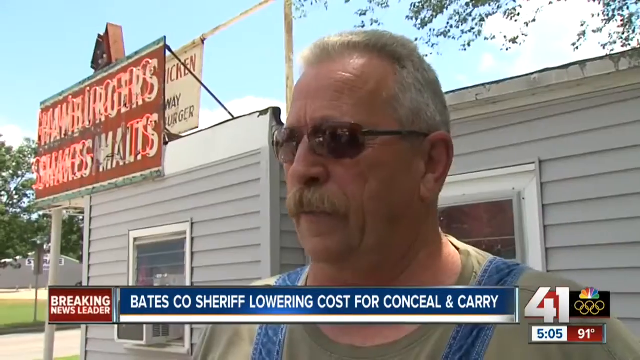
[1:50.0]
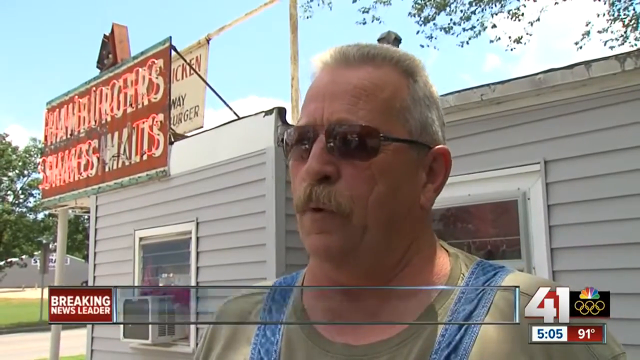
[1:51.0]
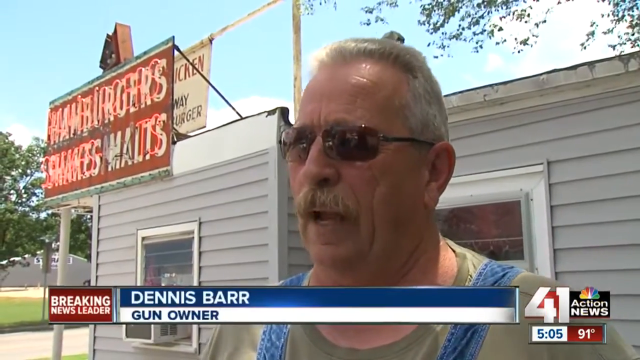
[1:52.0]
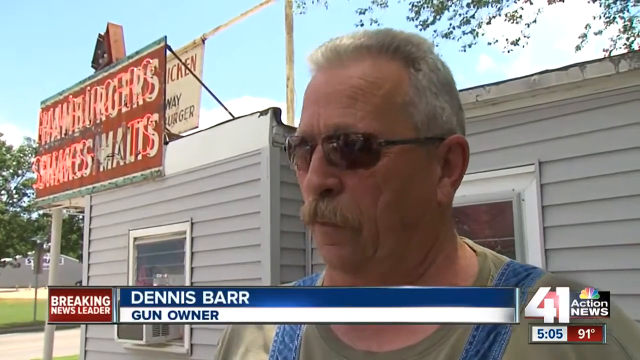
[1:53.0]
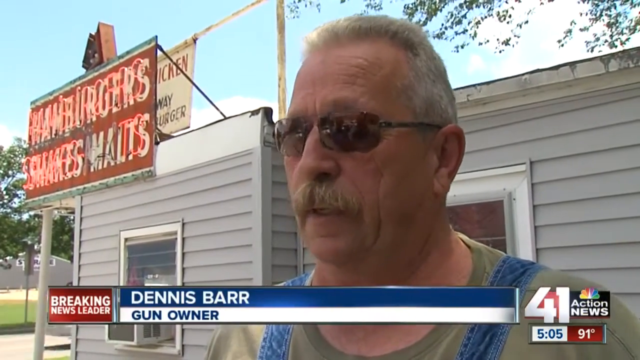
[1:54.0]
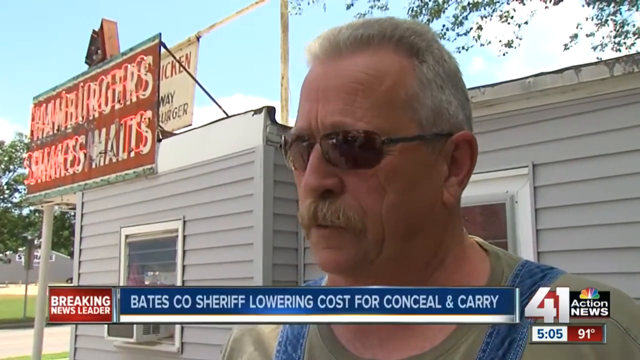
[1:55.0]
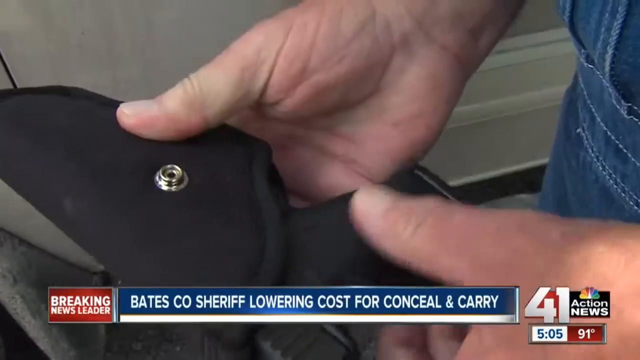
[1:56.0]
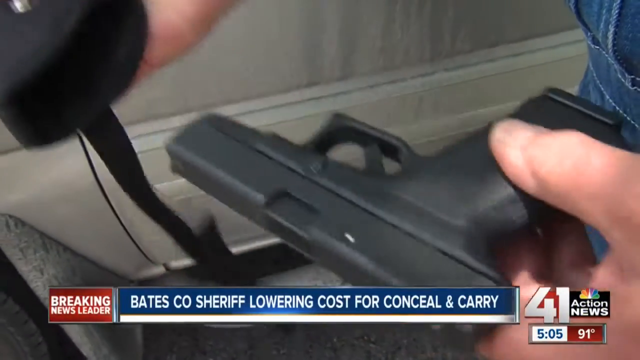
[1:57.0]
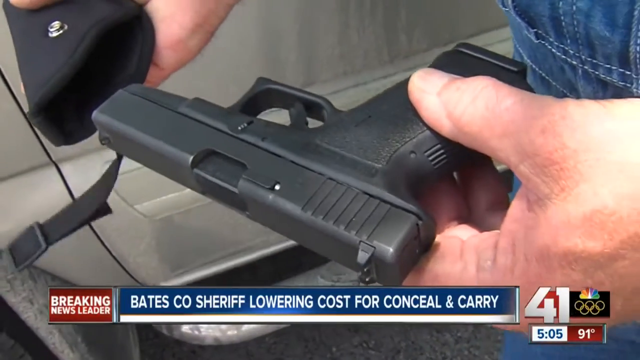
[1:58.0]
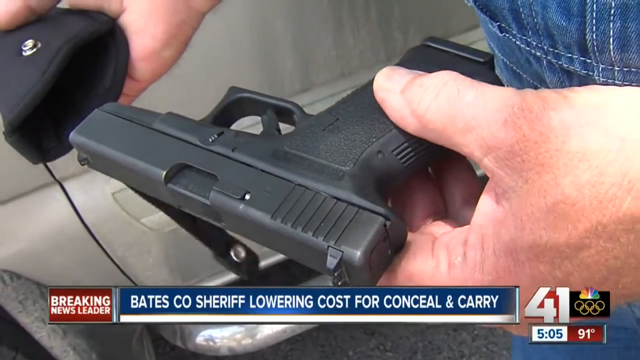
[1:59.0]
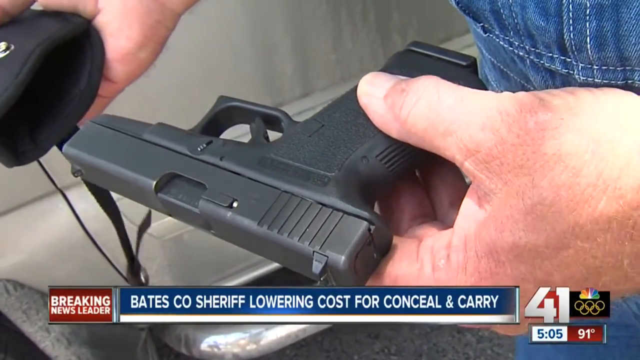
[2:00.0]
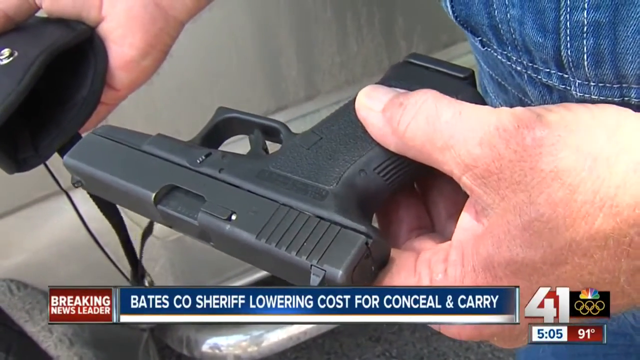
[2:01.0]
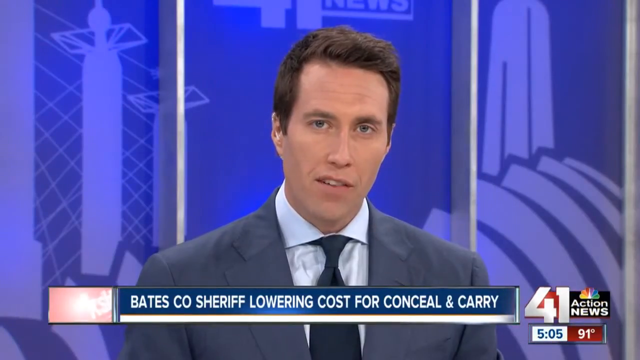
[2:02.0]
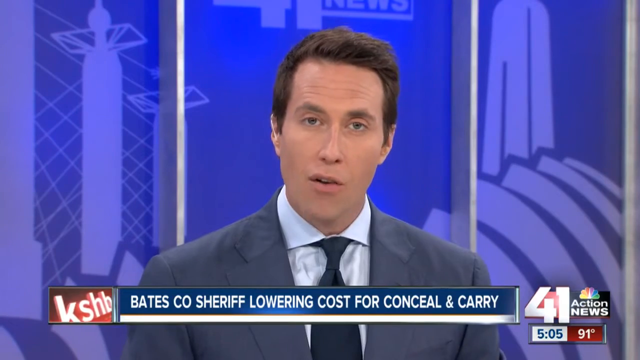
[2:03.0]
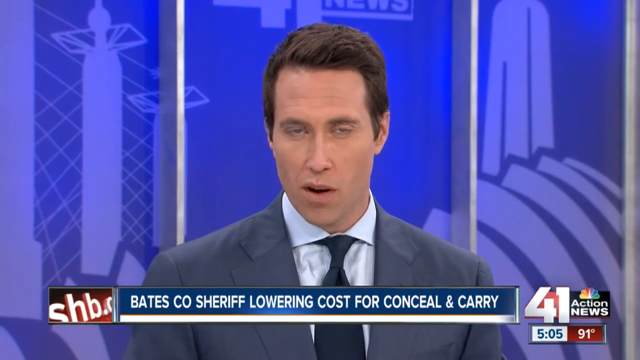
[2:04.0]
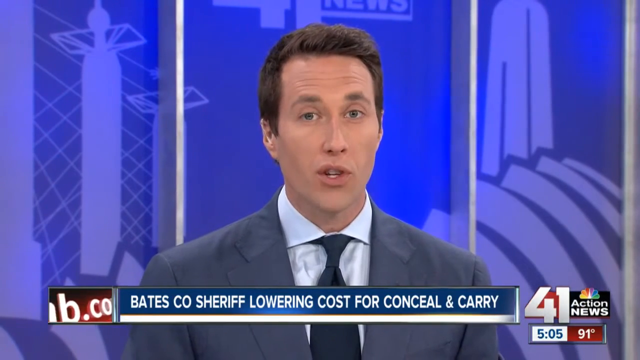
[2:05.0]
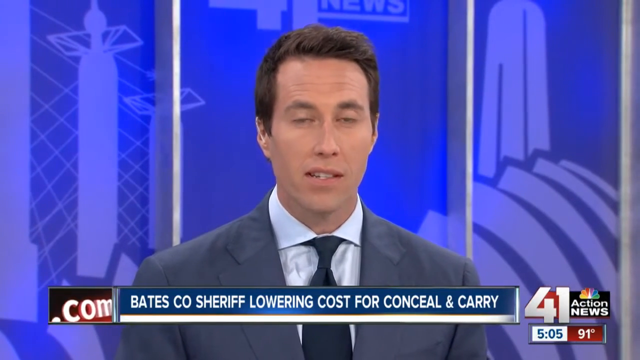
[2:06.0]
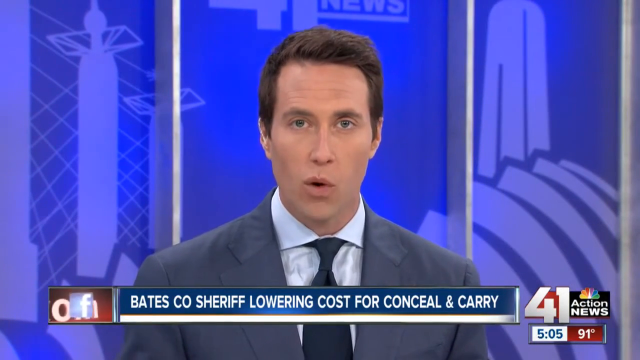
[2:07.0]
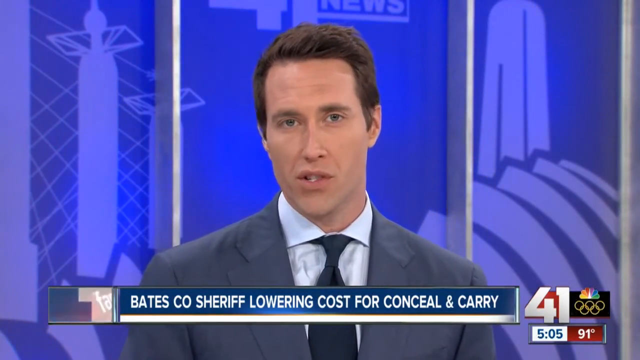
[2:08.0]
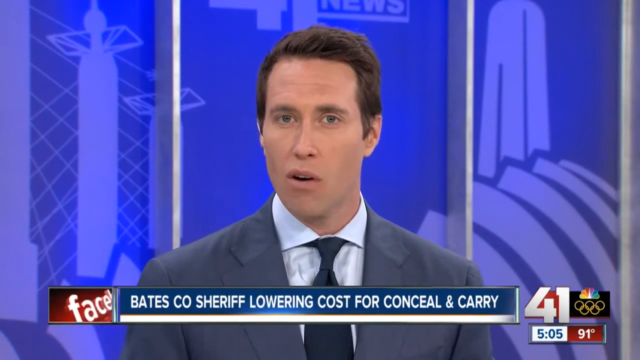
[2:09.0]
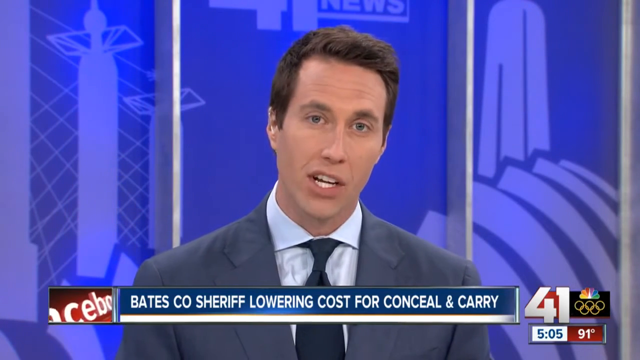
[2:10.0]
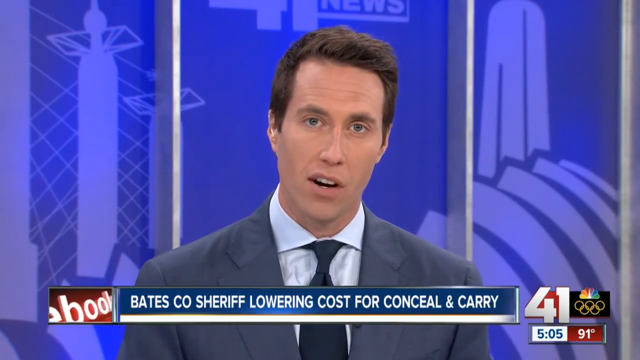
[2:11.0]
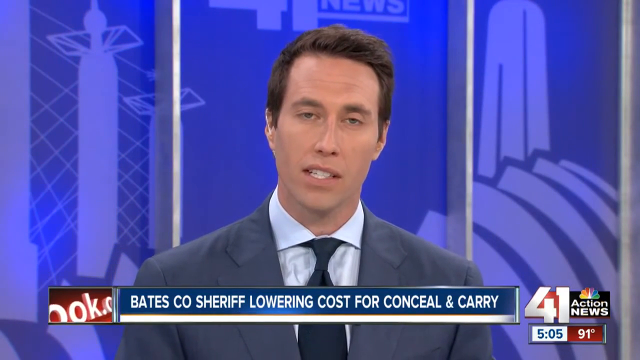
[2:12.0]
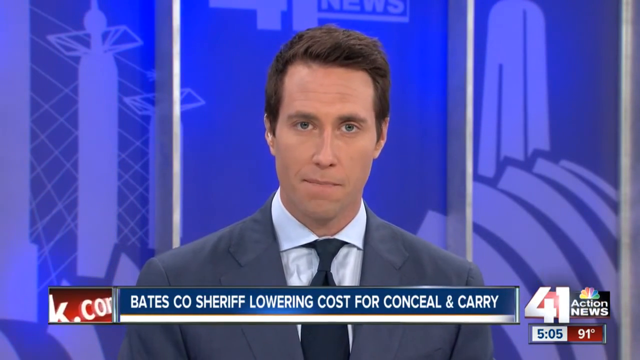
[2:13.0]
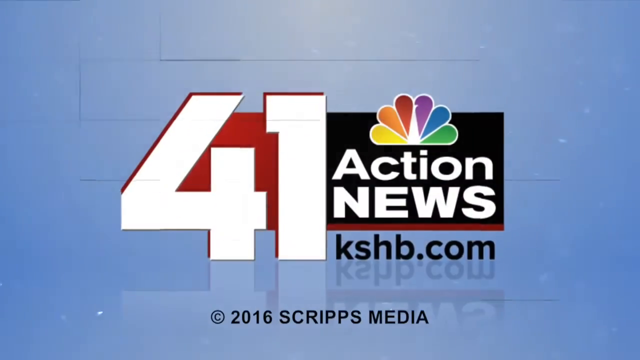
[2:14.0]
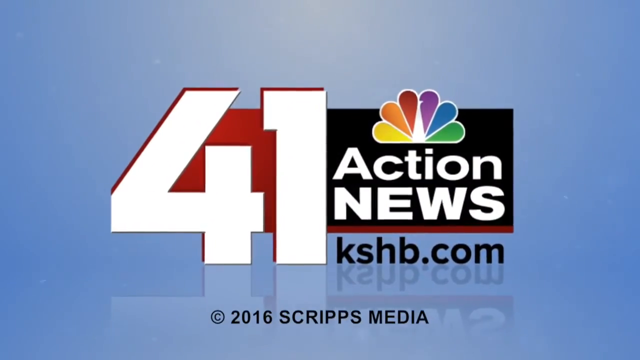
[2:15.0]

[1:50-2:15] A man with short gray hair, sunglasses and a mustache, wearing blue overalls, has a restaurant behind him with a red fluorescent sign reading "hamburgers, shakes, malts." Text gives his name as Dennis Barr, a gun owner, and he moves his head about as he talks. He then uses both hands to show a gun and a holster, pulling the holster off with his right hand while keeping the gun in his left hand; the holster swings as he holds it in place. The video cuts to a newsroom, where a man with short dark hair, wearing a gray suit, a dark tie and a light shirt, speaks to the camera, moving his head around, nodding a bit and shaking his head. Finally it cuts to a blue screen with "41 Action News, KSHB.com" at the very center of the blue background.